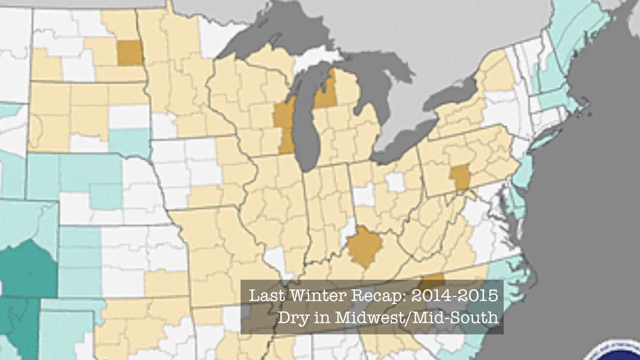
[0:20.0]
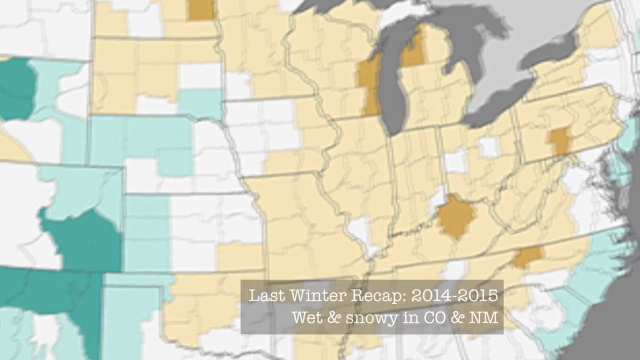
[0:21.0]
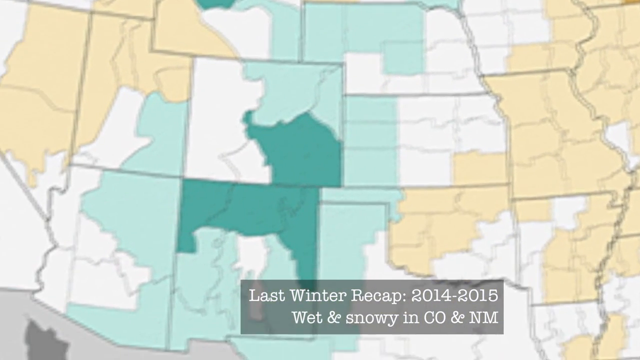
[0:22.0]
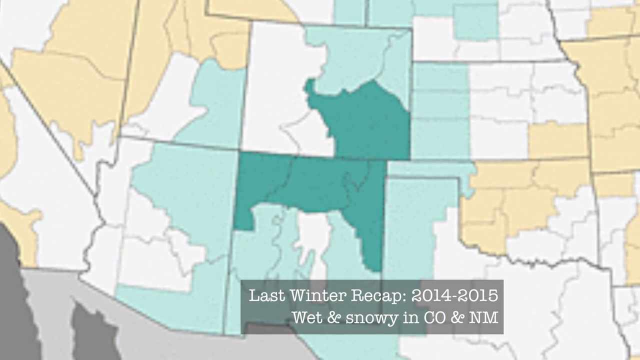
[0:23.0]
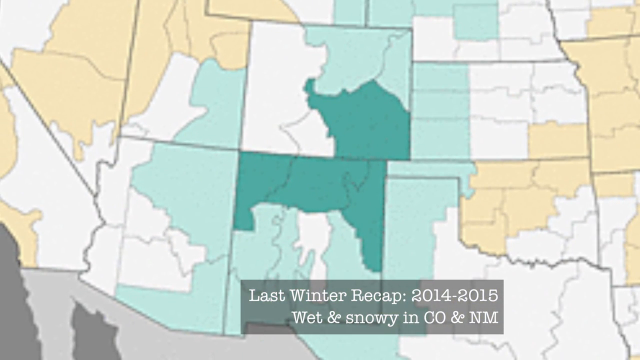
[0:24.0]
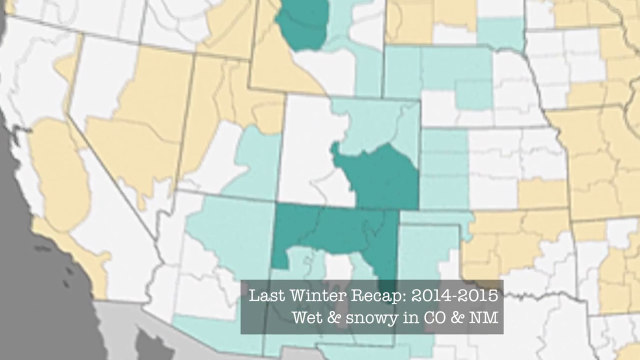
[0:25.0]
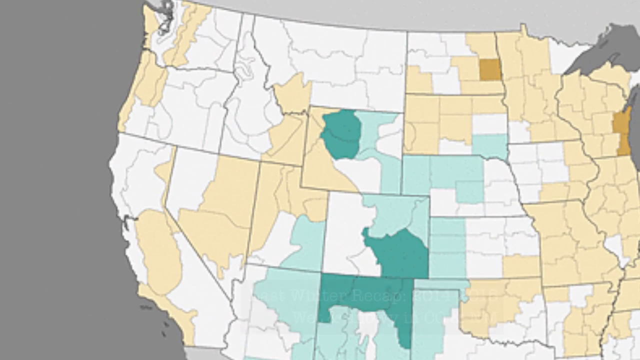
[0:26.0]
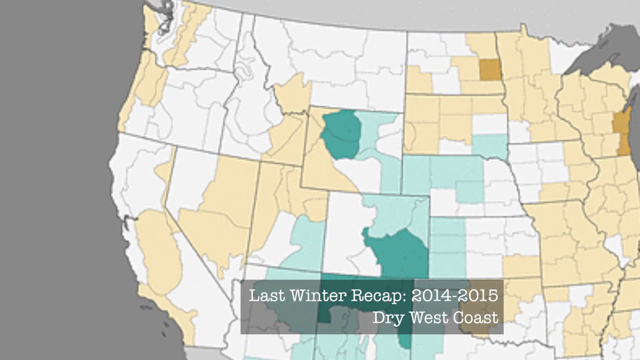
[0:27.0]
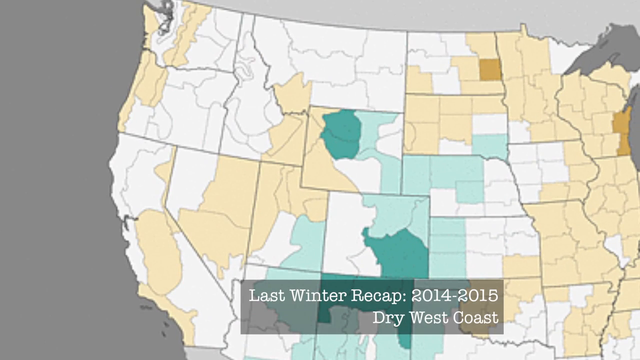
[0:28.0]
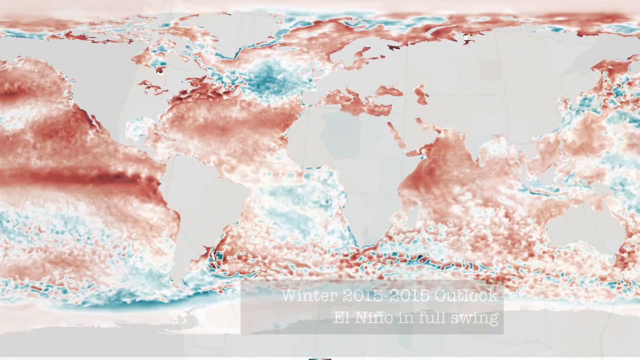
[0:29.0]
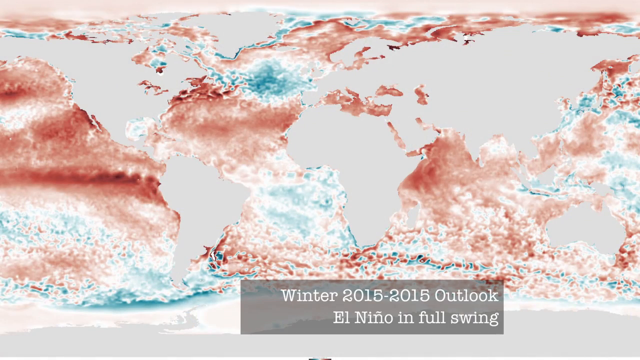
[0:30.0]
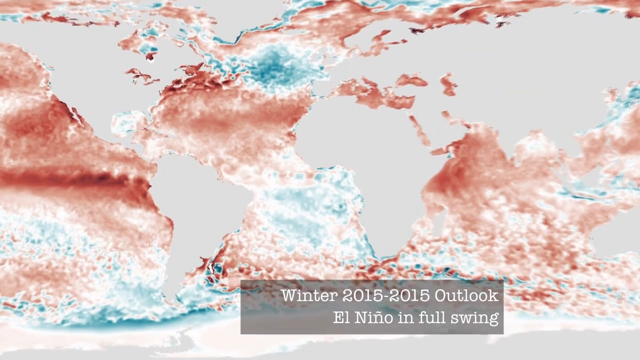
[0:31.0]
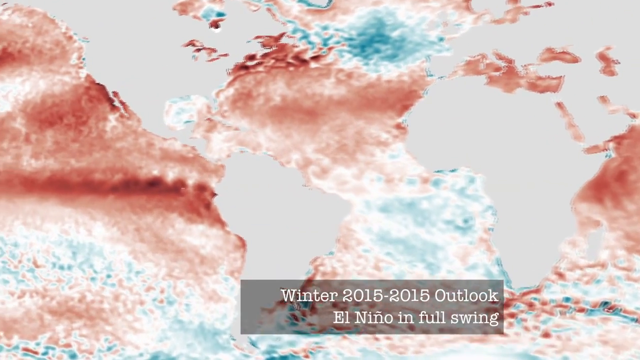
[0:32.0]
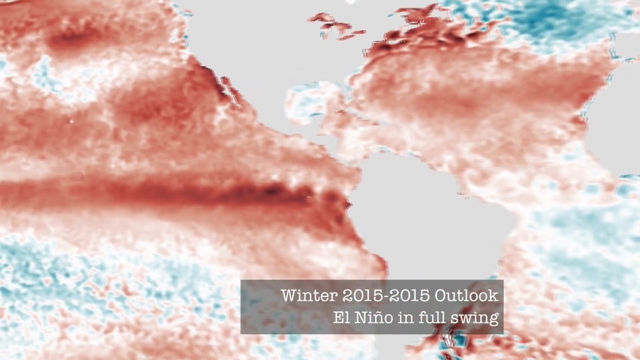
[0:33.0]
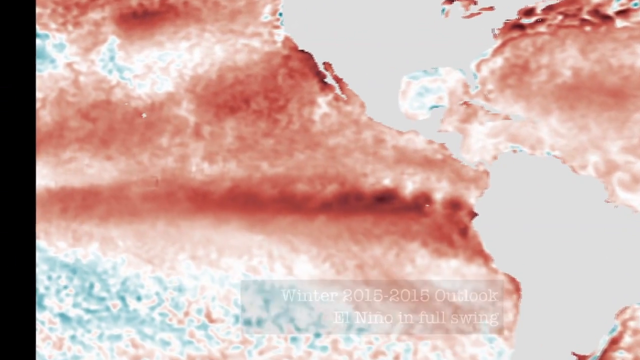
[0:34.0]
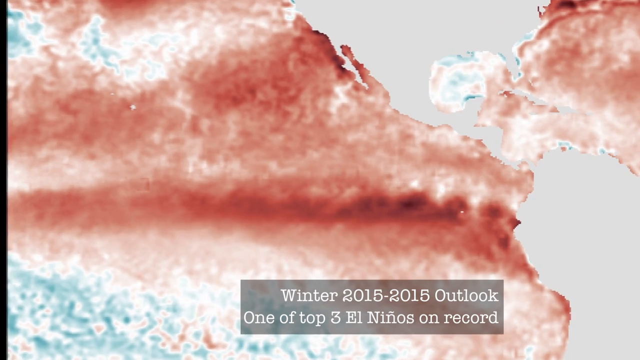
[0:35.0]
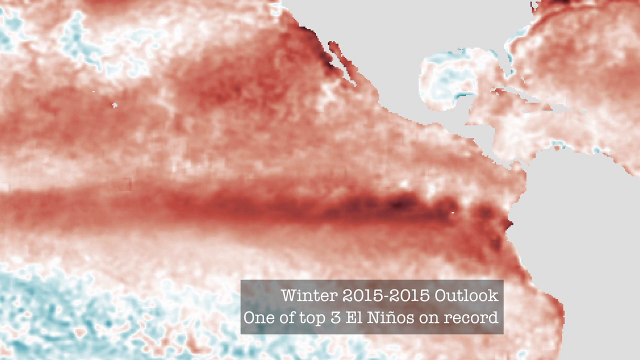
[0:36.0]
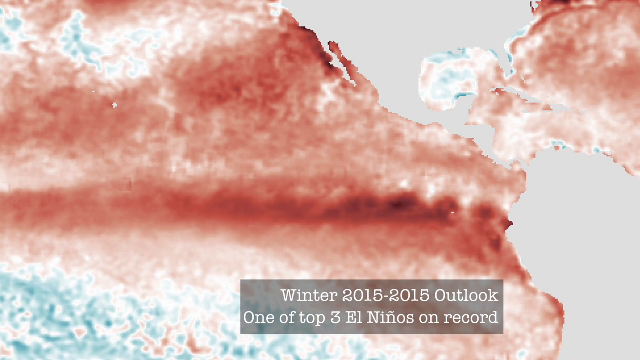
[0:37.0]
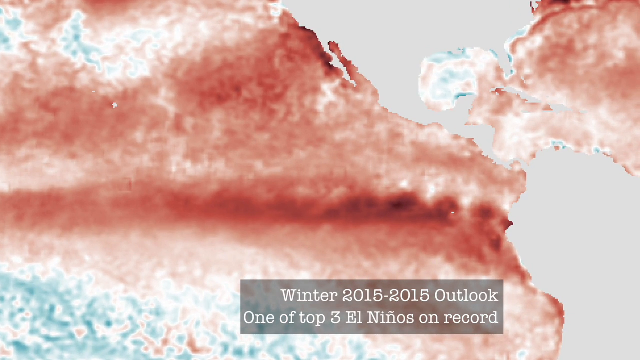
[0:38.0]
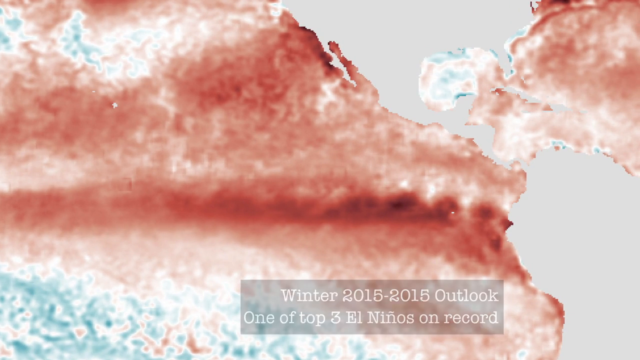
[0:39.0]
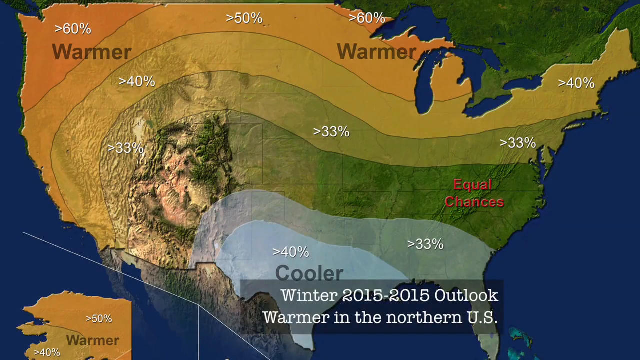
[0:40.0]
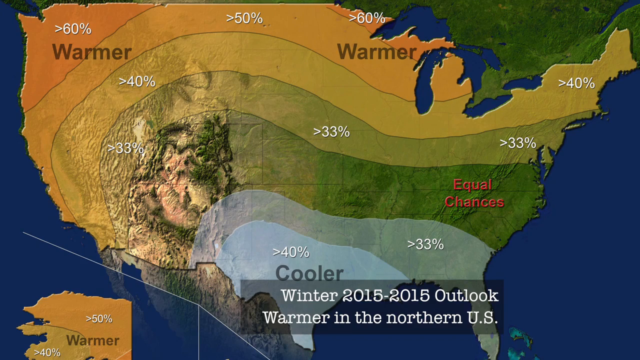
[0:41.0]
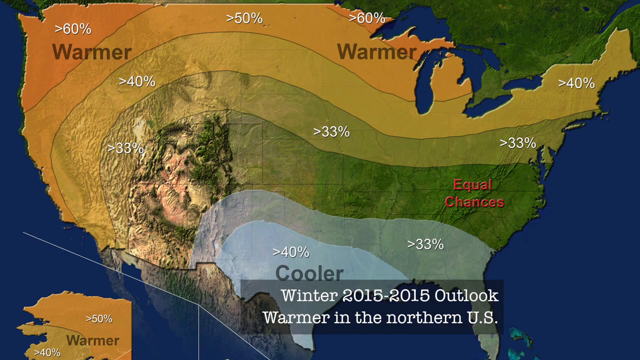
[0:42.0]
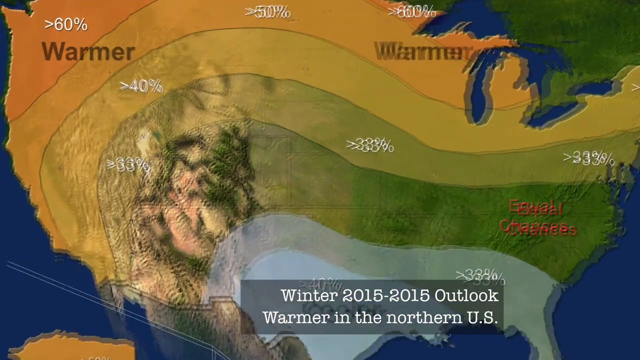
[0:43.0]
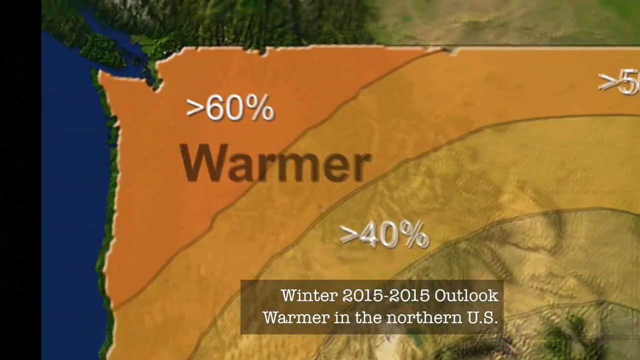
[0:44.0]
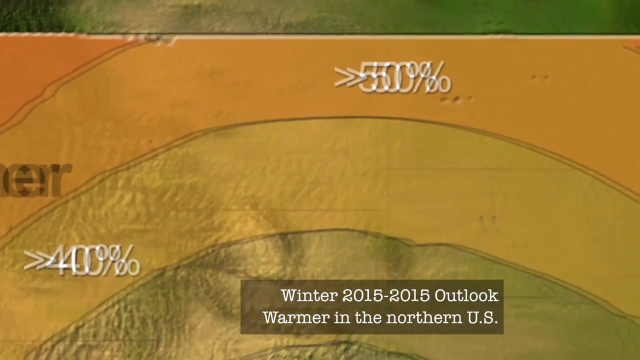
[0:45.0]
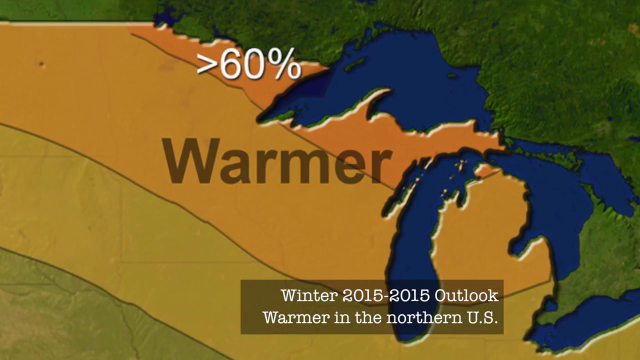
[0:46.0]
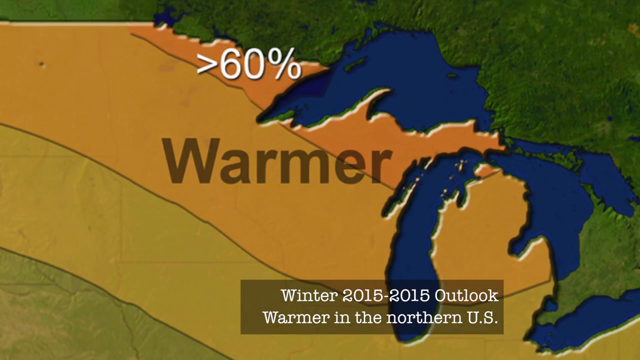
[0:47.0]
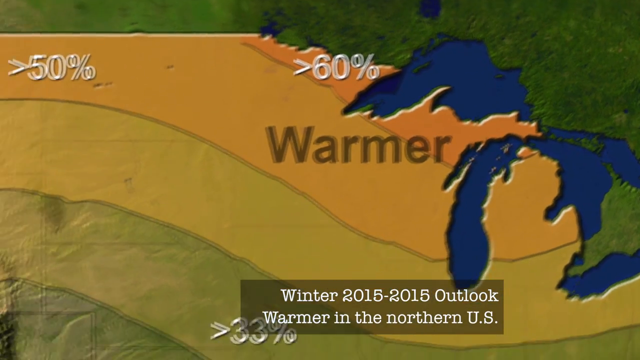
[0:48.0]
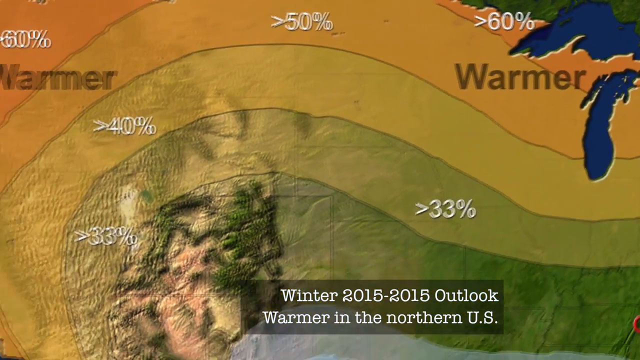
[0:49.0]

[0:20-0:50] Text at the bottom of the screen reads "last winter recap 2014 to 2015 dry in Midwest/ Mid-South, wet and snowy in Colorado and New Mexico." The view pans over to Colorado and New Mexico on the map; they are in white and teal colors, sectioned off. It zooms out to show the whole United States. Another map view follows, in red and white colors with a little bit of blue, with the text "winter 2015 to 2015 outlook El Nino in full swing," and it zooms in on a portion of the map with red and white sections. Next comes another map of the United States marked warmer at the top, over Canada and the top part of the U.S., with percentages in different sections: 60 percent, 50 percent, 40, 33, 33, and 40. The bottom part of the U.S. is blue and labeled cooler. The view then zooms up to the top part of the U.S. with the warmer section and its percentages.